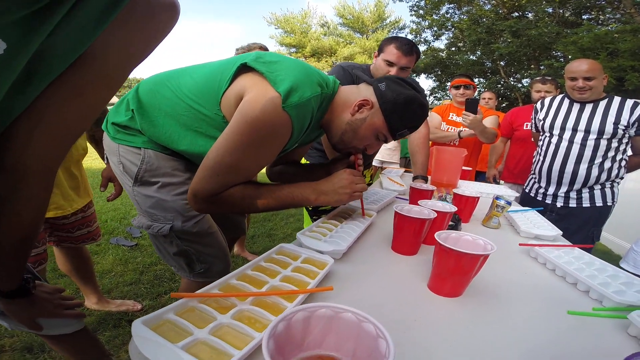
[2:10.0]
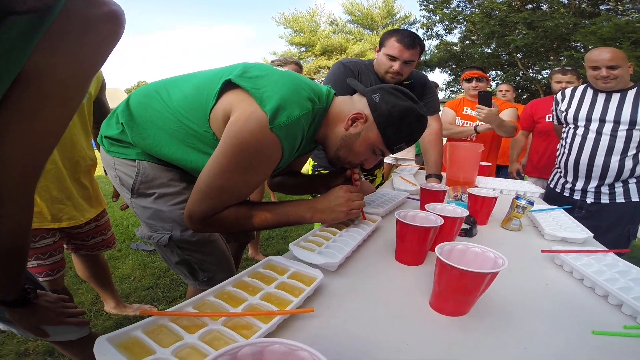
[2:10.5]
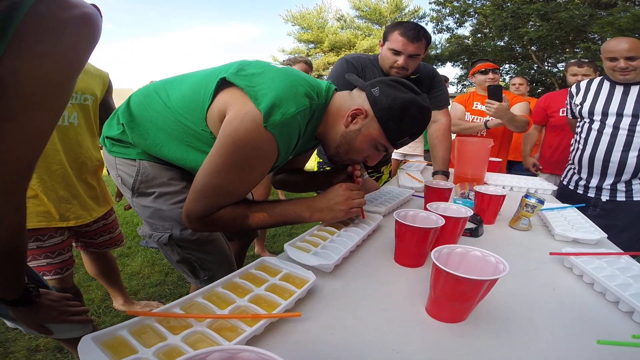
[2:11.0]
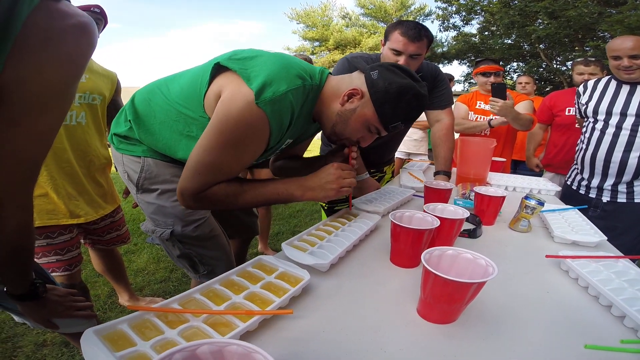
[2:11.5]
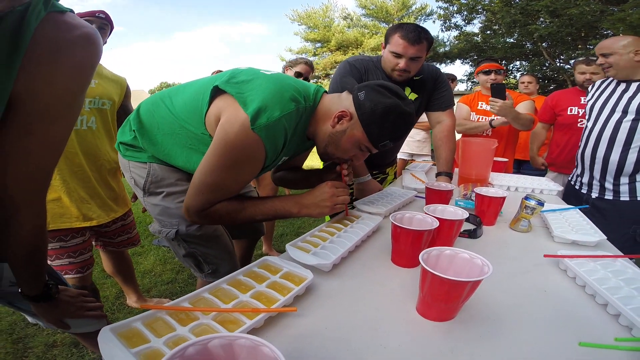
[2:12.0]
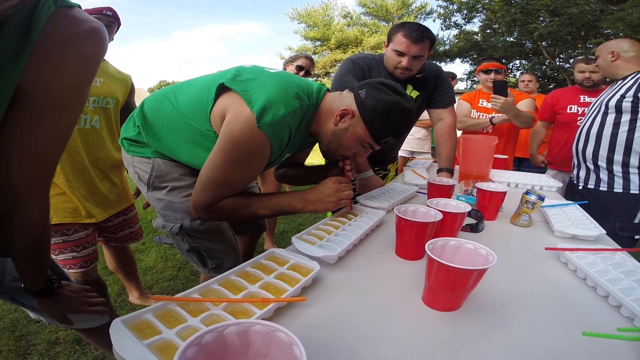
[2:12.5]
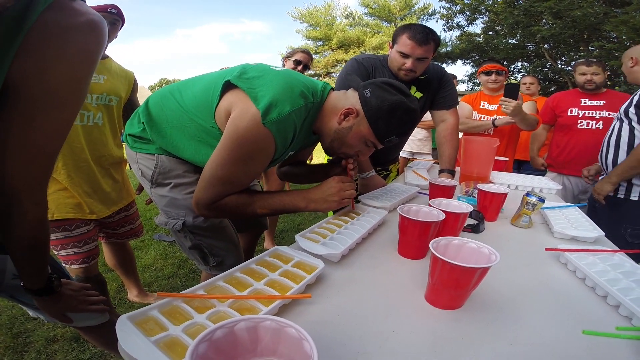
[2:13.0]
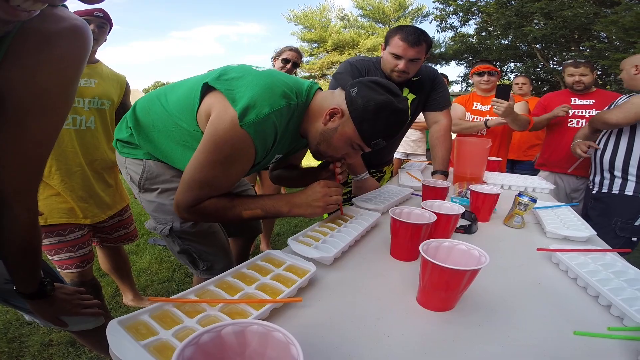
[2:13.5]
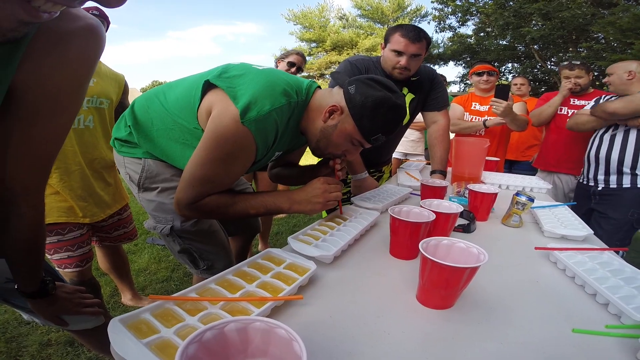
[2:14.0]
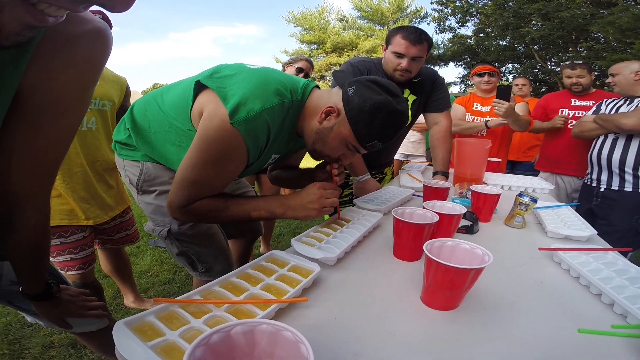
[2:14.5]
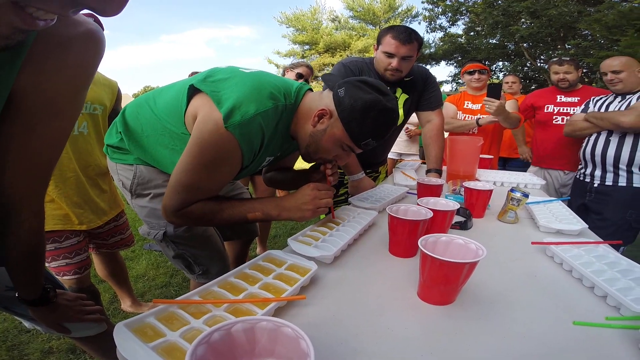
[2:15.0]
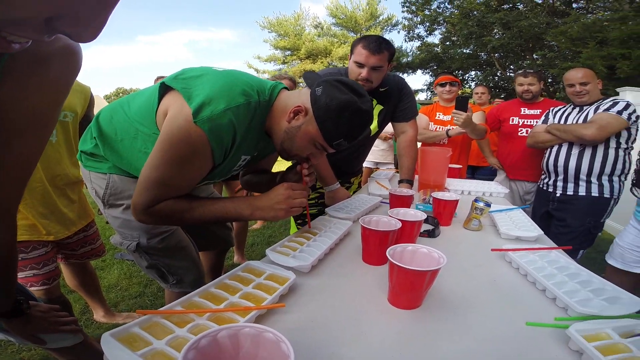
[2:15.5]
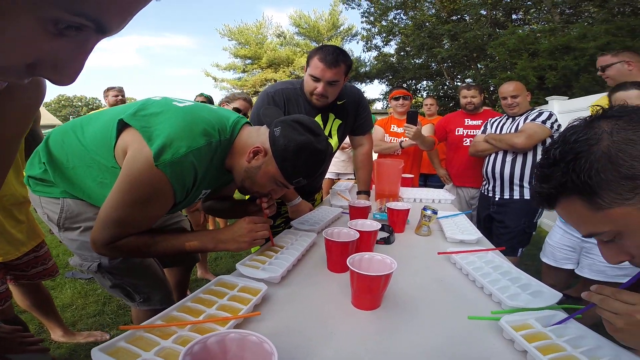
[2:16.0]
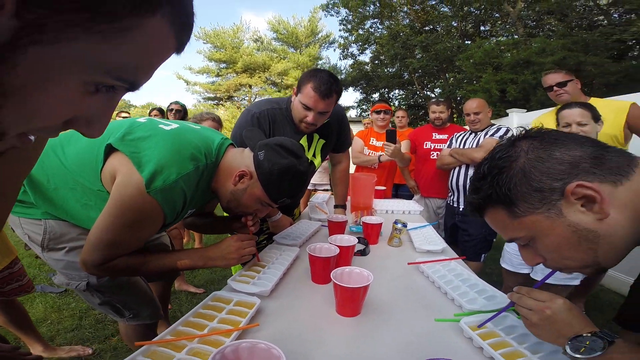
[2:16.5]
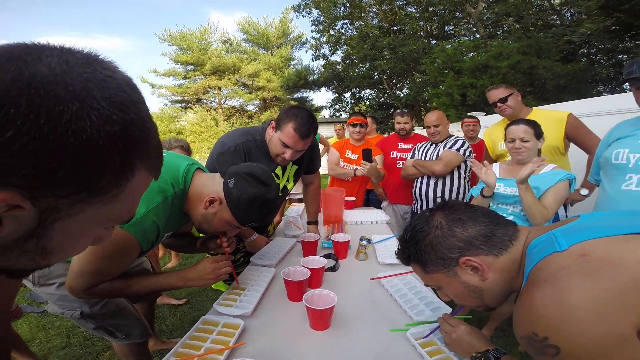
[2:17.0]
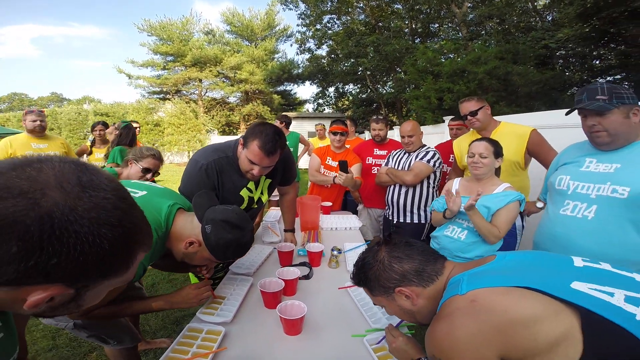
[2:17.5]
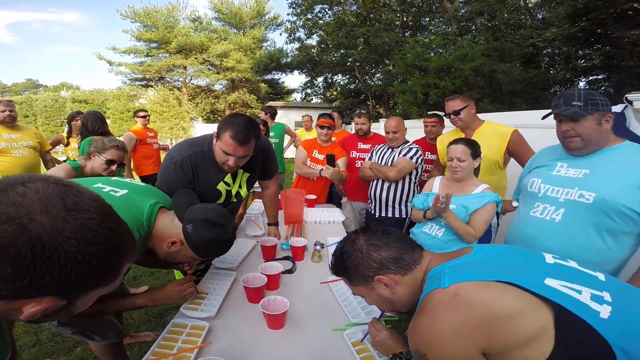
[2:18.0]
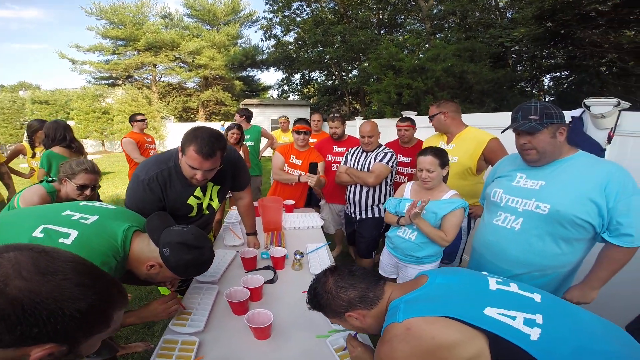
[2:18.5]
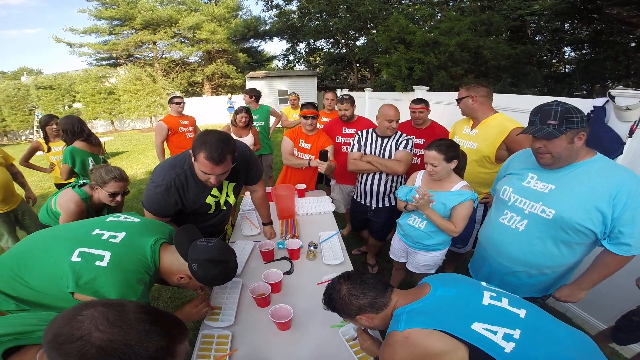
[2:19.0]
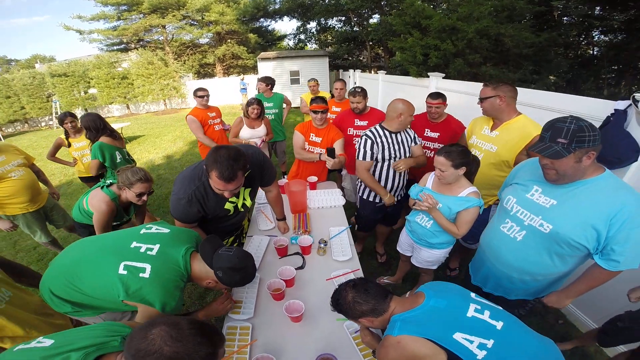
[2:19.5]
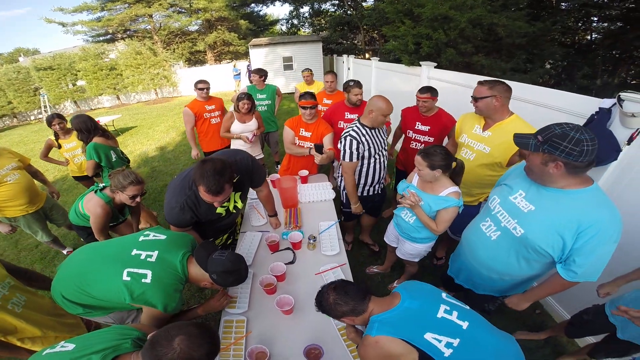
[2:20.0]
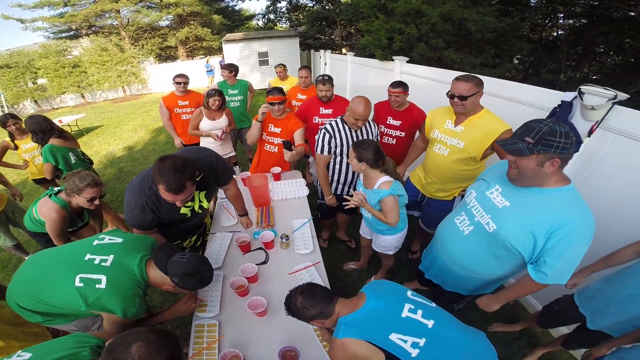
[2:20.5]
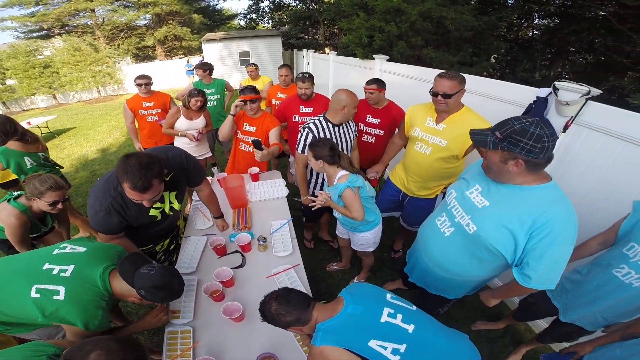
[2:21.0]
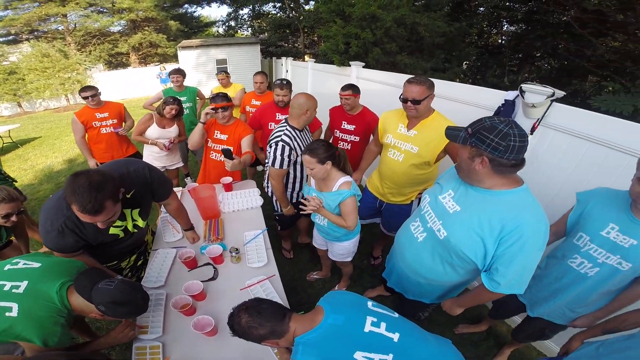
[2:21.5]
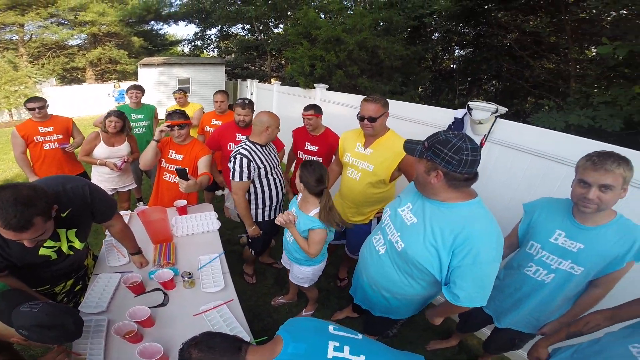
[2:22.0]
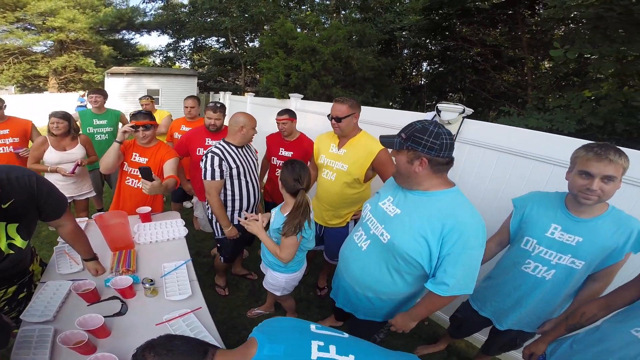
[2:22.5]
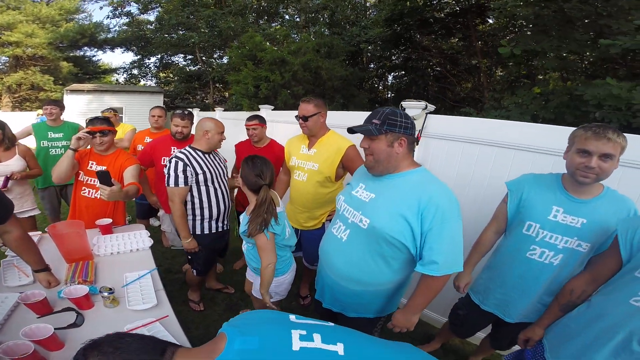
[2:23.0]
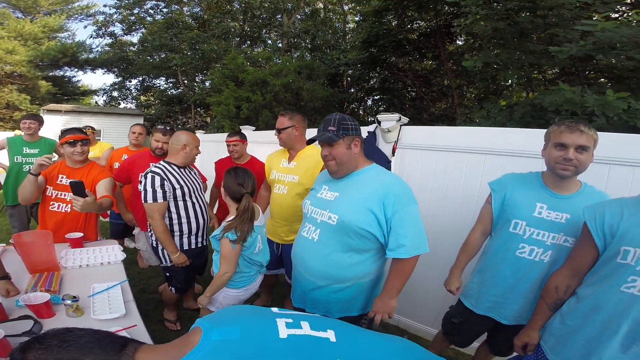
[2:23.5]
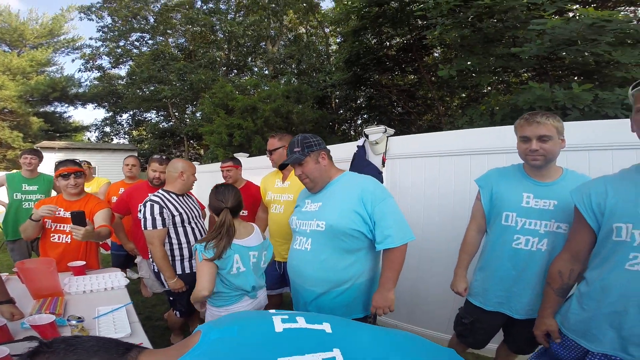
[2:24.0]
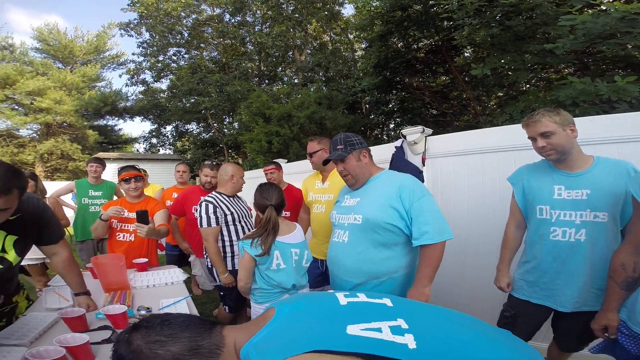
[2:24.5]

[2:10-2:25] A close-up shows the man on the green team on the left side of the table, in a backwards dark colored baseball cap, leaning over with his straw and soaking up beer from the last couple of sections of his ice cube tray. To his right, a teammate, another man who is not clearly visible, waits to start. The camera pulls away to a broad shot of the members of the light blue team standing around, with a fence behind them, probably about five feet from the table, and some unidentified stuff leaning against the fence. The referee is still on that side of the table, watching from far away. The light blue team's participant, leaning over and not seen close up, appears to be almost done. The back of his T-shirt looks like it says "AFC" in very large letters. Almost all the T-shirts have really short sleeves, almost like sleeveless T-shirts. One of the women from the light blue team starts clapping for a little bit, then turns around and talks to the referee.